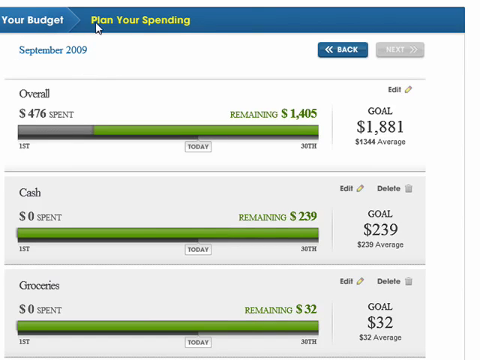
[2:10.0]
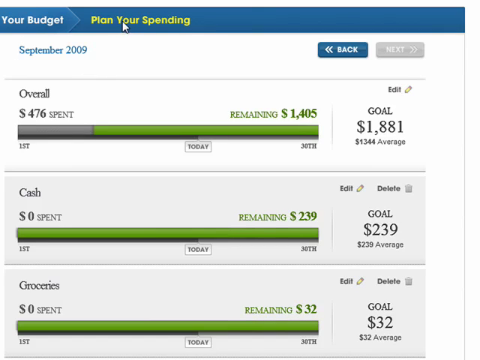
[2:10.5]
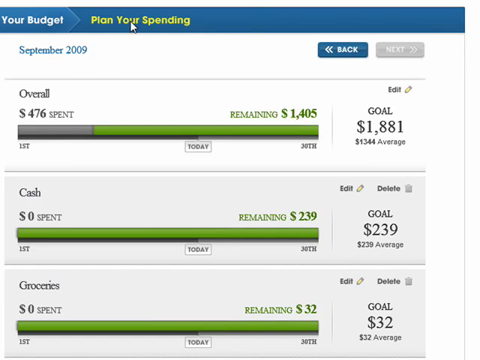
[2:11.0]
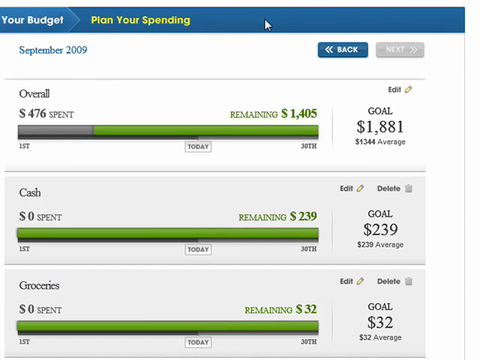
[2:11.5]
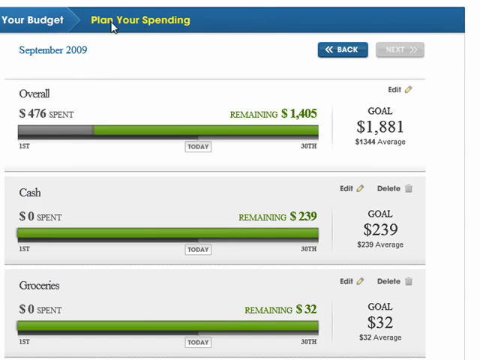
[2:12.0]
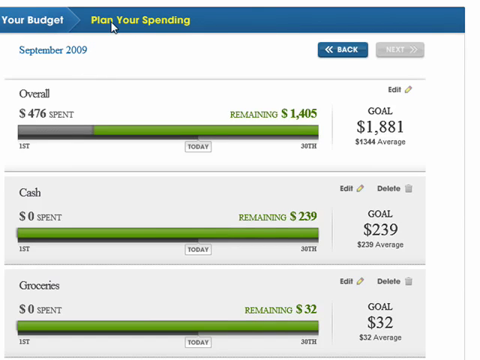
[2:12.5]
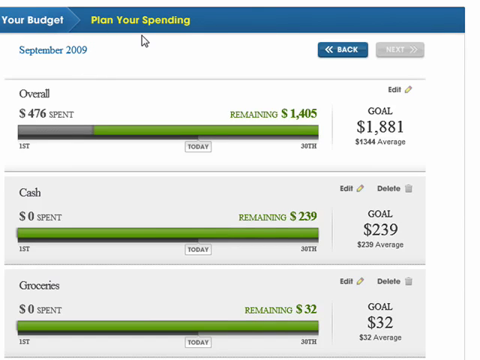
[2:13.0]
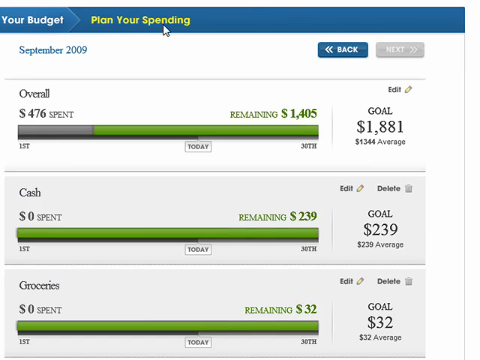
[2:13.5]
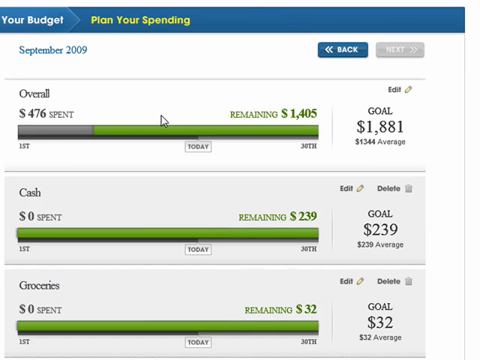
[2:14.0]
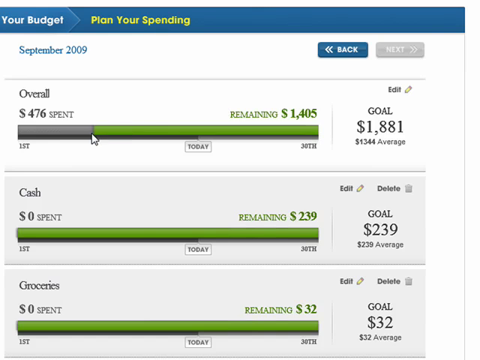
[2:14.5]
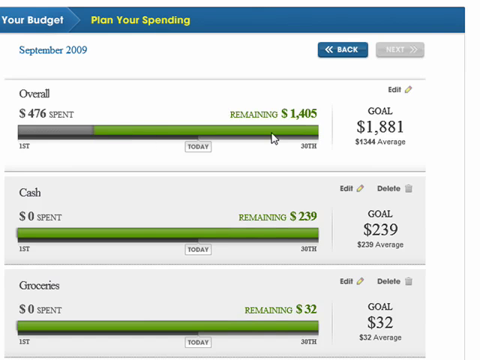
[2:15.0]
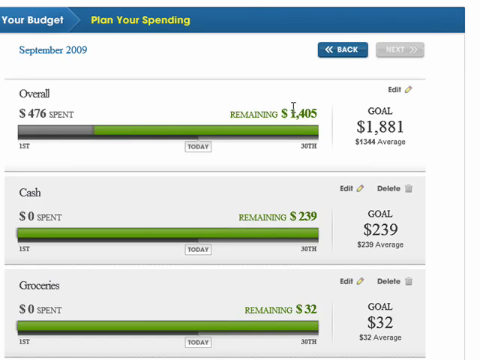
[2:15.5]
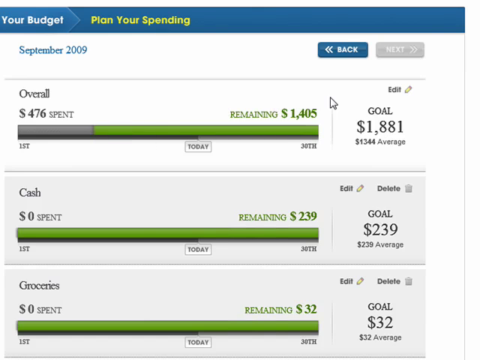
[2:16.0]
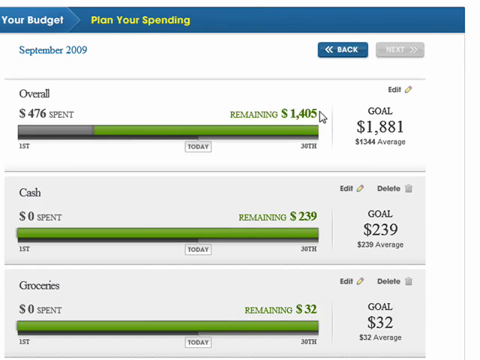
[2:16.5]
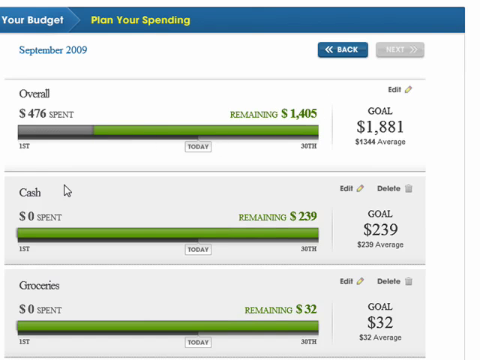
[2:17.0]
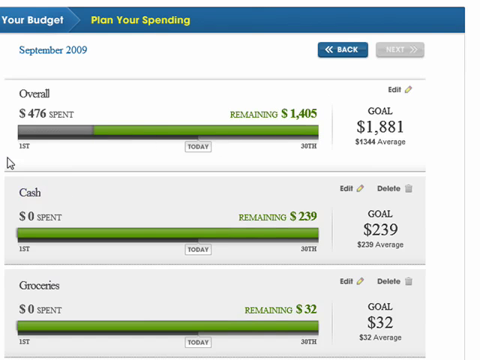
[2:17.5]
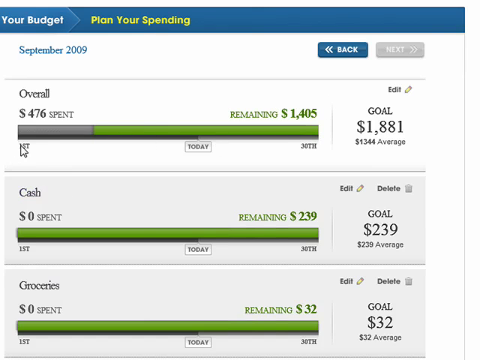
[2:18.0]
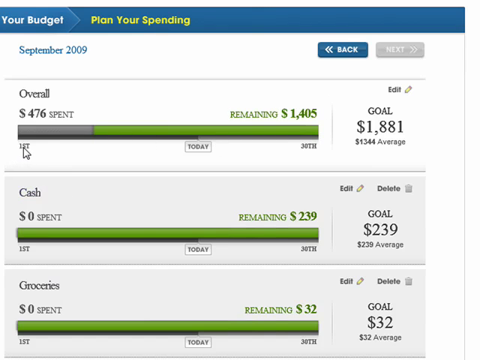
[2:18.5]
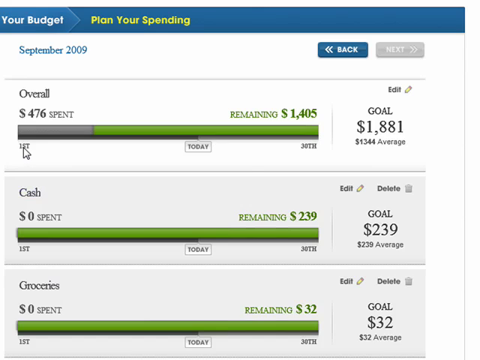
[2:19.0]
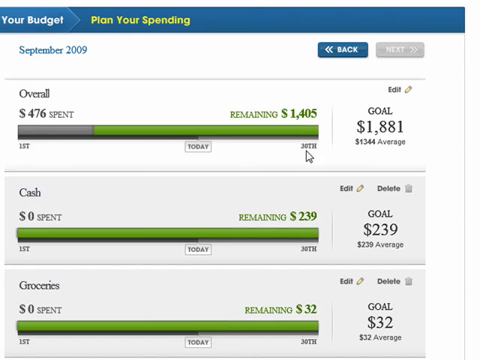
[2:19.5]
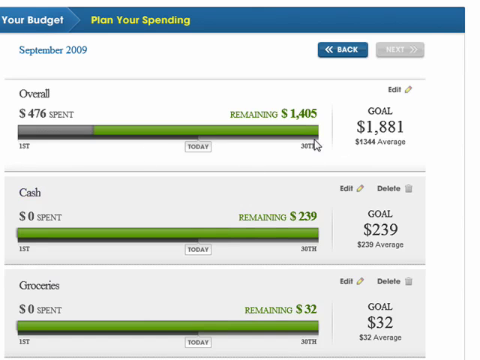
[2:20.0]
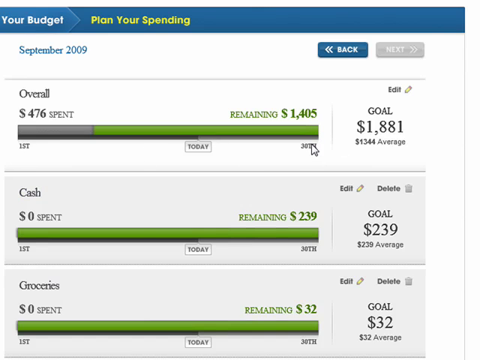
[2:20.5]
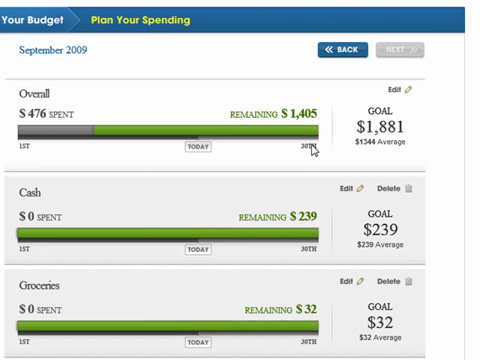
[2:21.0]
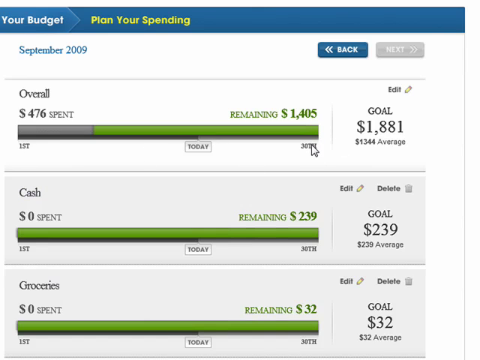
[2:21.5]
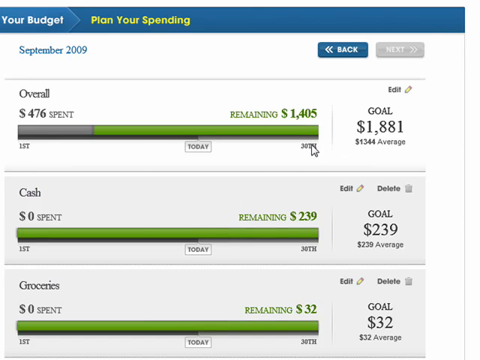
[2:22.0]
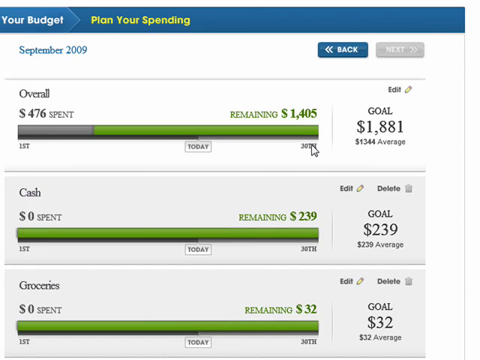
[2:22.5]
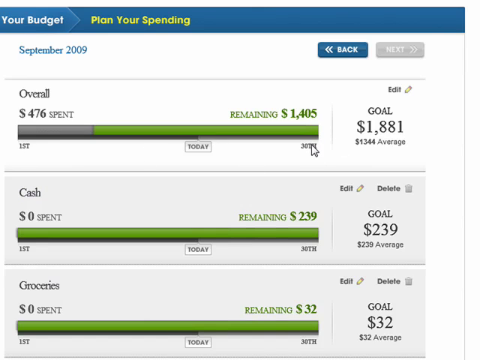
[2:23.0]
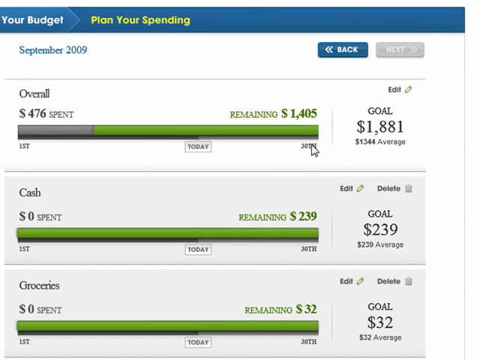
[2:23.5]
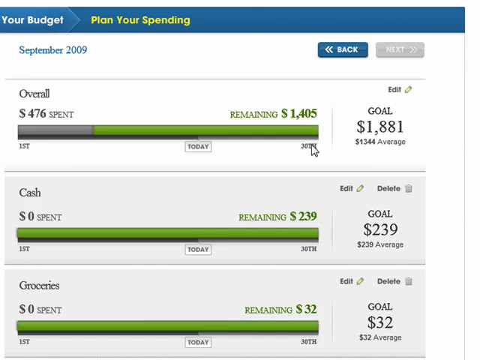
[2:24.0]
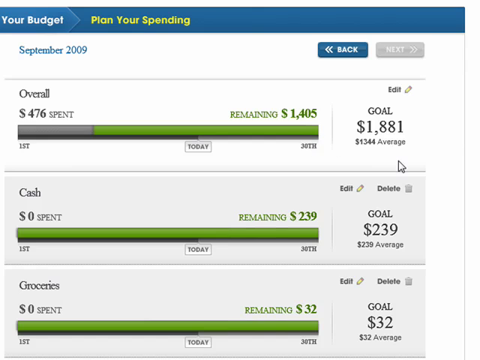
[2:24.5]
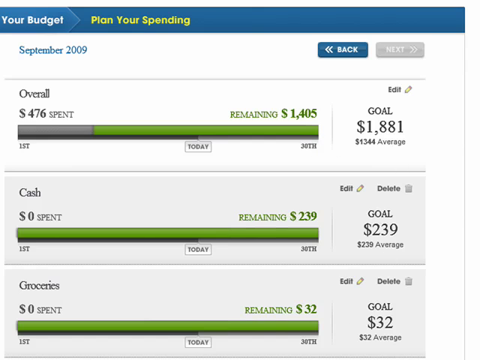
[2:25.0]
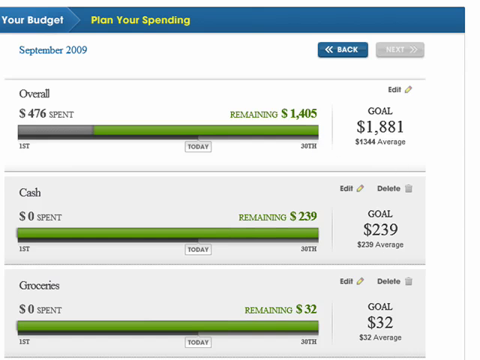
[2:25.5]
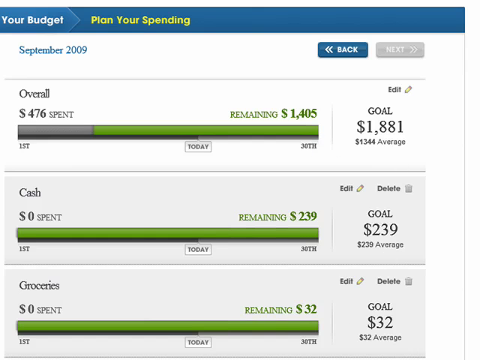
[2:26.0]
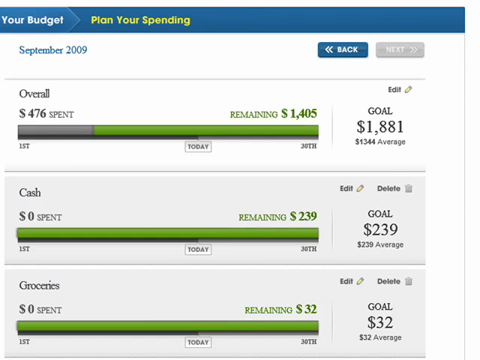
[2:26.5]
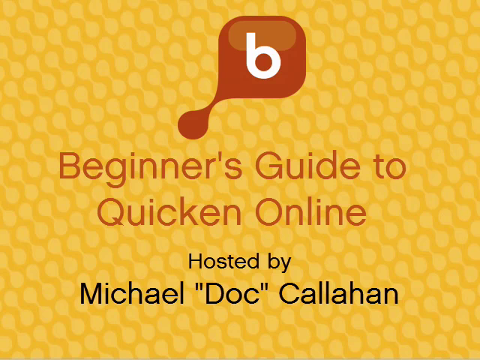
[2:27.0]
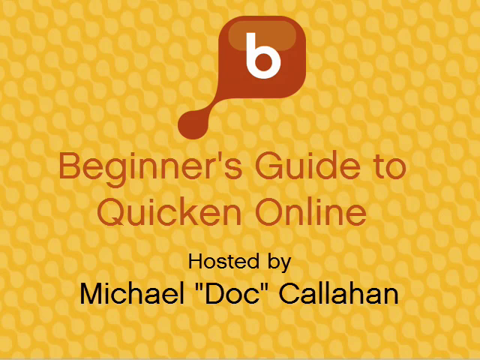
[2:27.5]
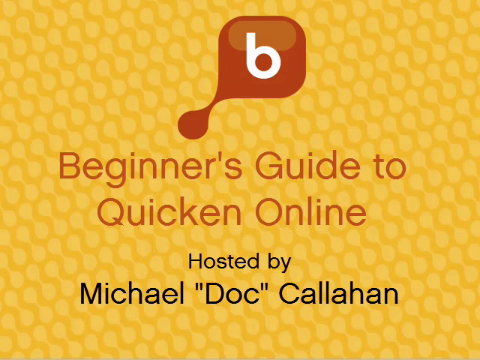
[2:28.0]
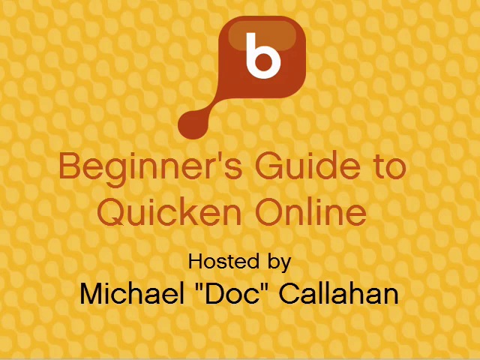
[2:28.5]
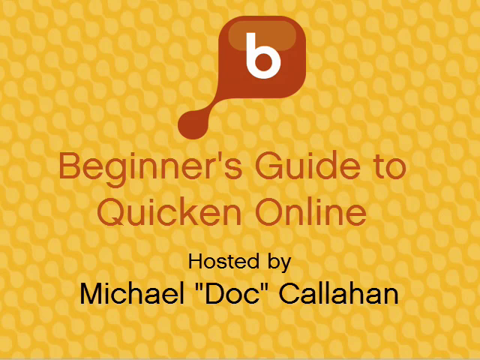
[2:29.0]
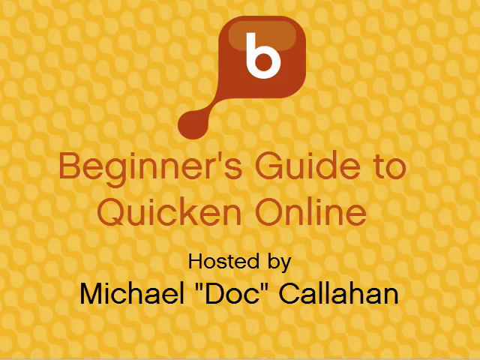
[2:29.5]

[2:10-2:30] The same section is still shown. The user hovers over the top section, Overall, where the goal is $1,881, with $476 spent and $1,405 remaining. Labels on the bottom right corners of the bar run from the first to the 30th. A closing screen then appears reading "beginner's guide to quicken online hosted by Michael "DOC" Callahan", with the same gold background of small circles forming a design as on the intro screen.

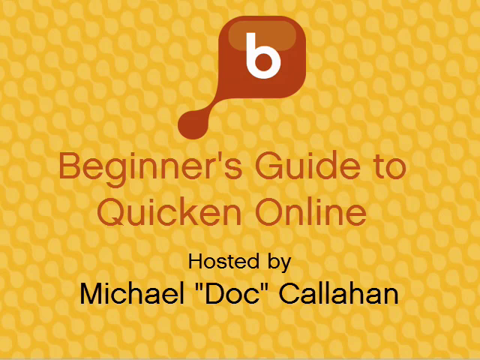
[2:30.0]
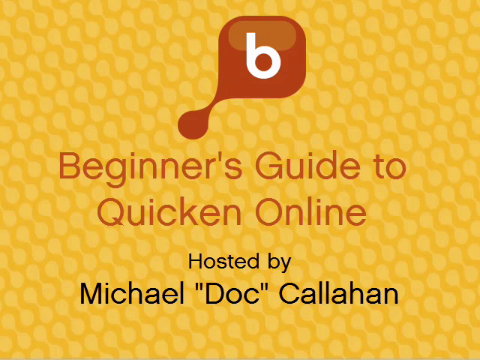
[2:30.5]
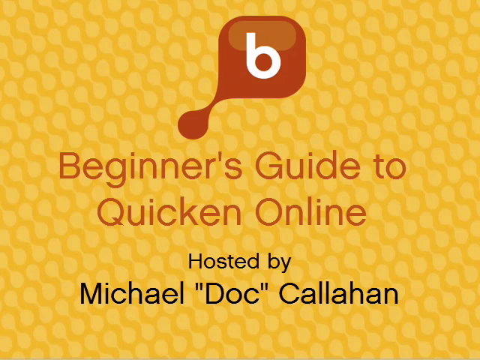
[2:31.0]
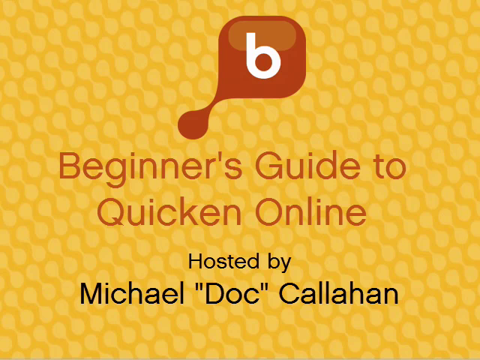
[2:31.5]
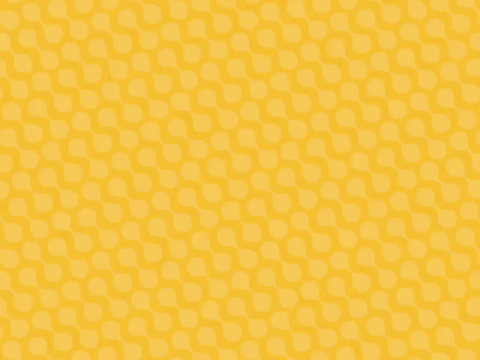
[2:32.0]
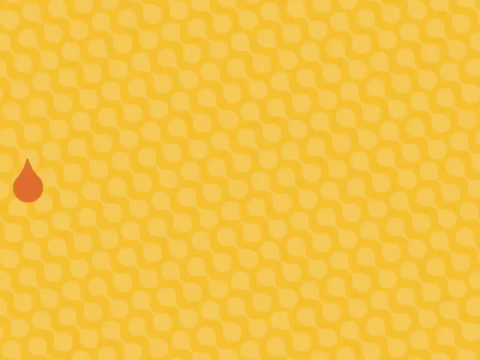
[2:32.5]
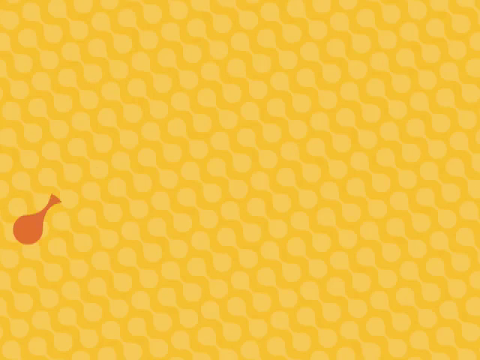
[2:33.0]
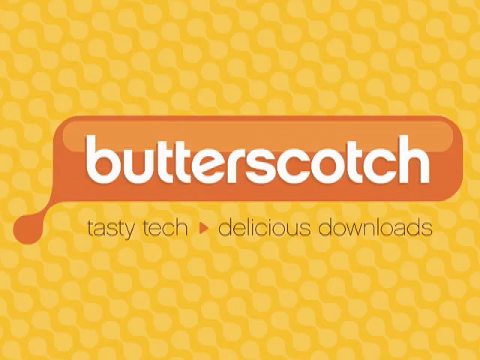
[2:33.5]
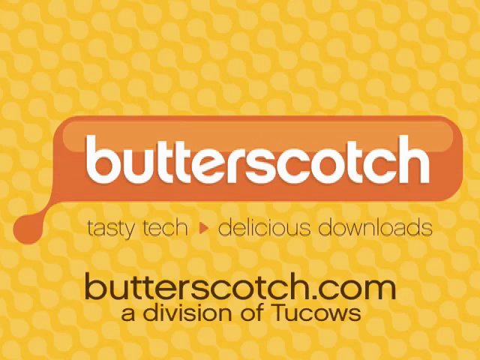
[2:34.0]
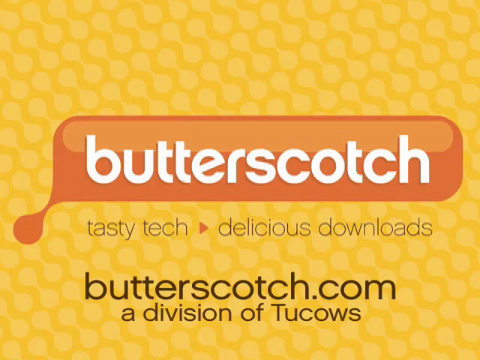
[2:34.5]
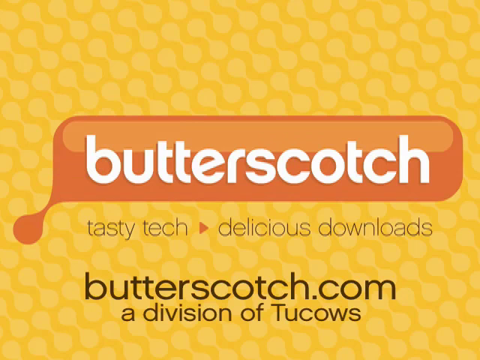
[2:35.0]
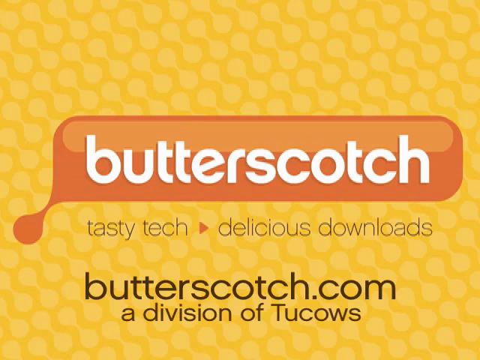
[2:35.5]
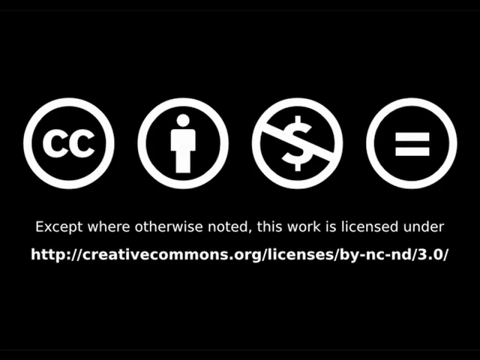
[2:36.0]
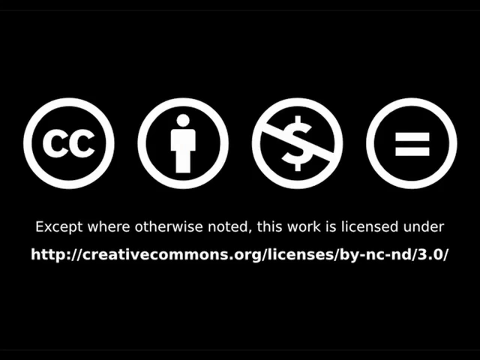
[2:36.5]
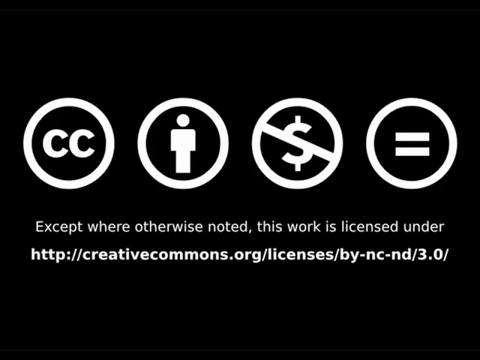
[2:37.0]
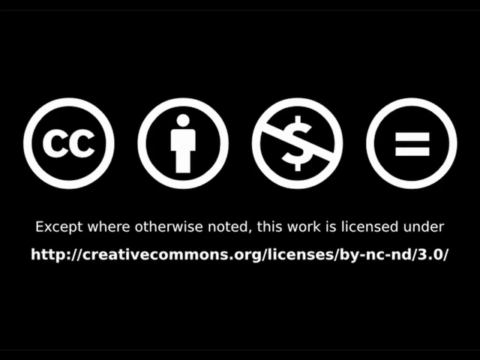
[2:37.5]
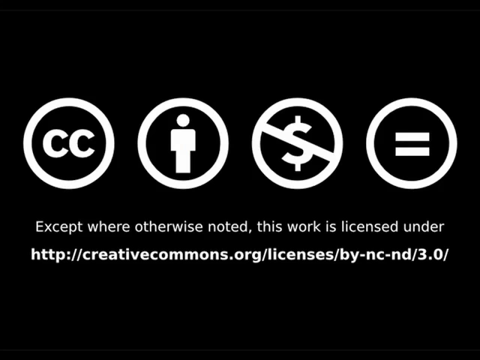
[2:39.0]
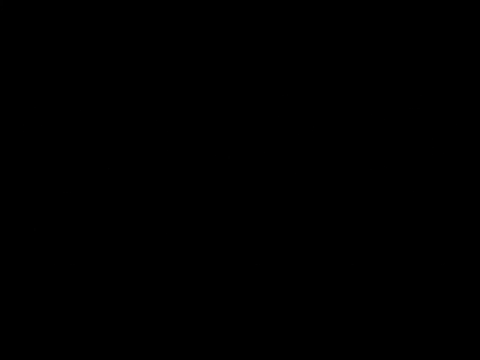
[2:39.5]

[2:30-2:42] The closing screen has a yellow background, the brown square with a lowercase "b", and brown text reading "beginner's guide to quicken online". A new screen with the same background follows, showing "butterscotch" in white text on a brown background, "tasty tech, delicious downloads", "butterscotch.com" in black text, and below that, also in black text, "a division of TUCOWS". The last screen shows four white circles: the first says "CC", the second shows a stick figure, the third a dollar sign with a line through it, and the fourth an equal sign. White text reads "except for otherwise noted, this work is licensed under", with a link below it.